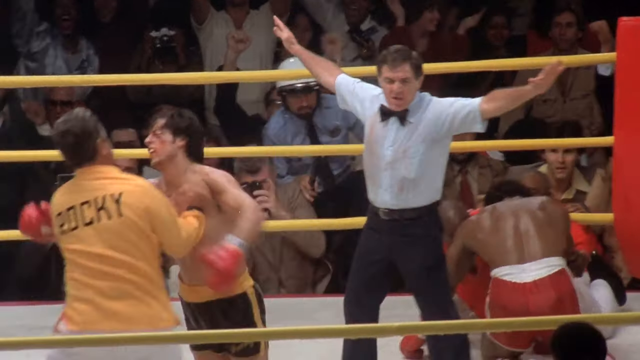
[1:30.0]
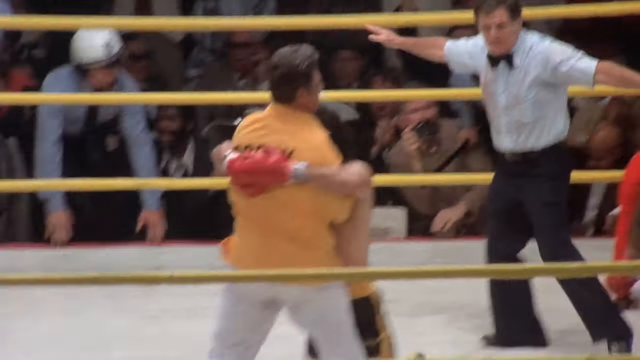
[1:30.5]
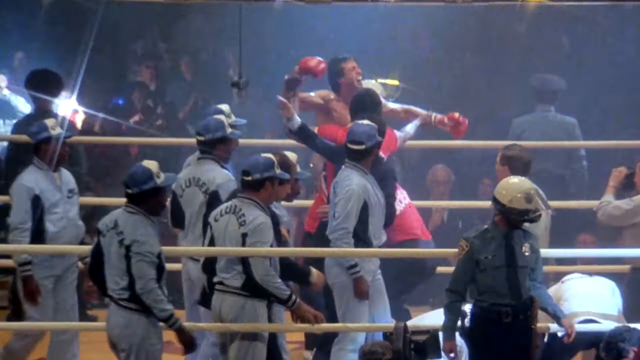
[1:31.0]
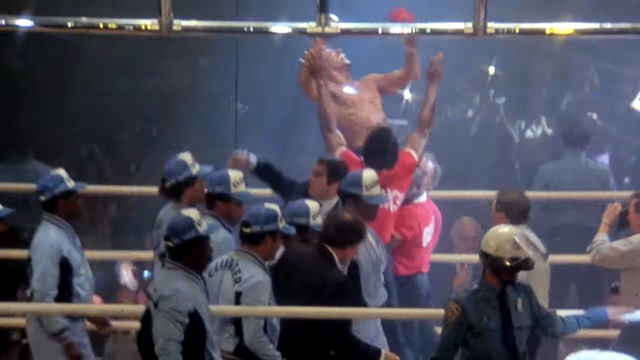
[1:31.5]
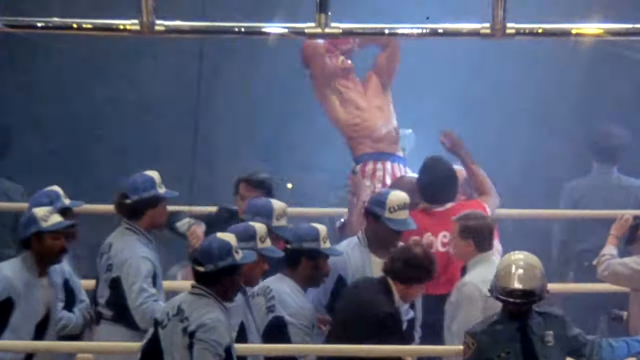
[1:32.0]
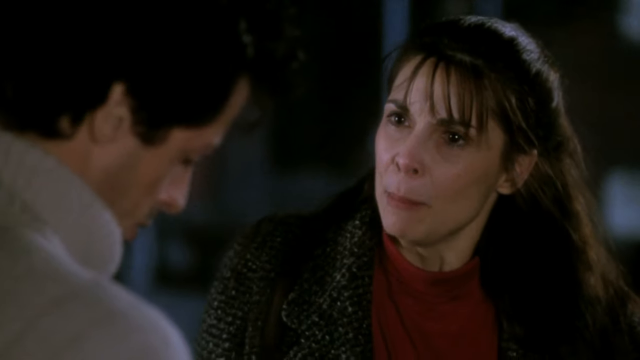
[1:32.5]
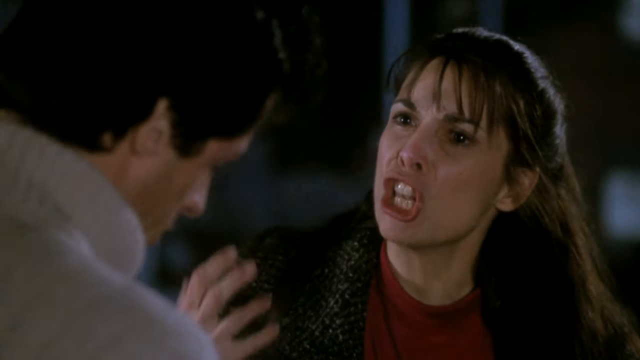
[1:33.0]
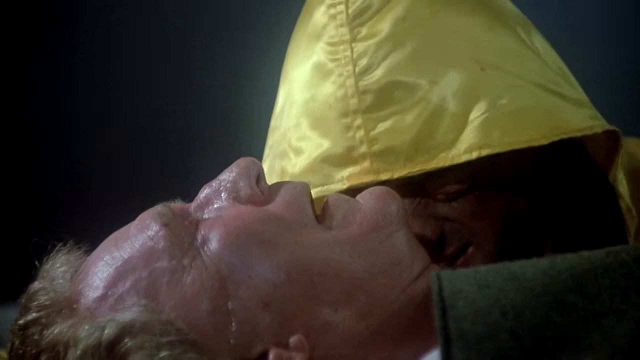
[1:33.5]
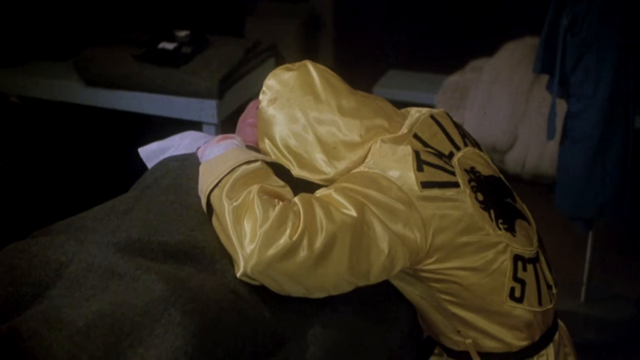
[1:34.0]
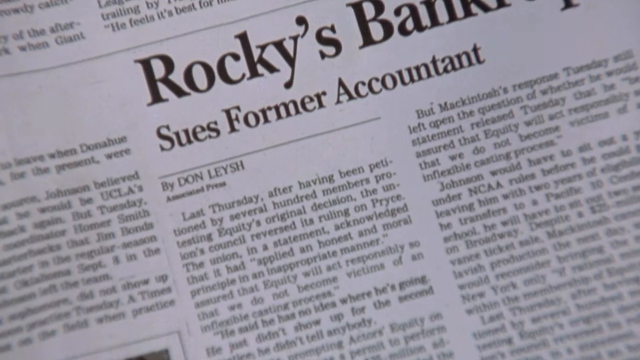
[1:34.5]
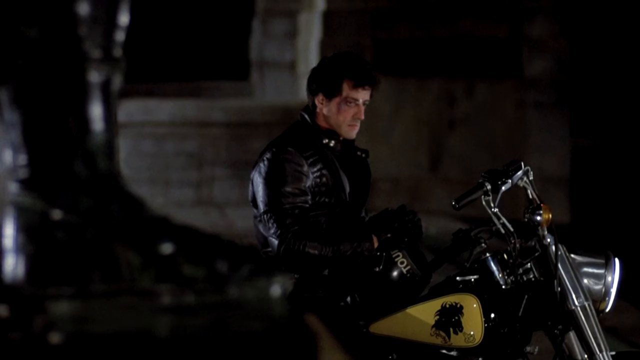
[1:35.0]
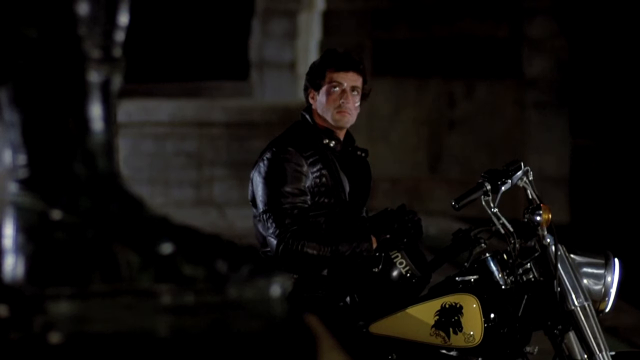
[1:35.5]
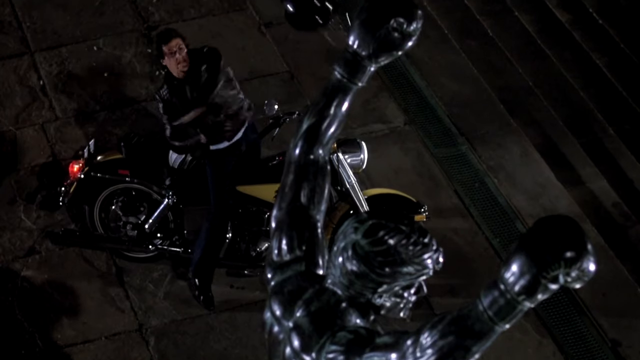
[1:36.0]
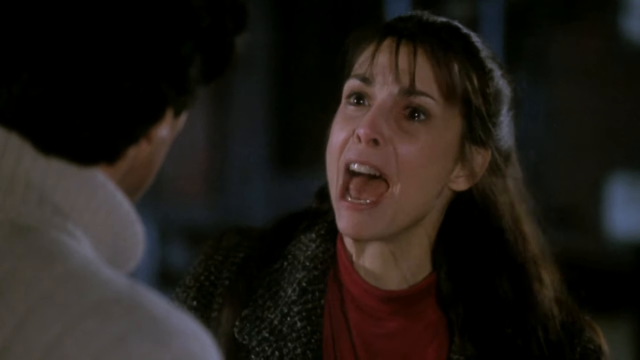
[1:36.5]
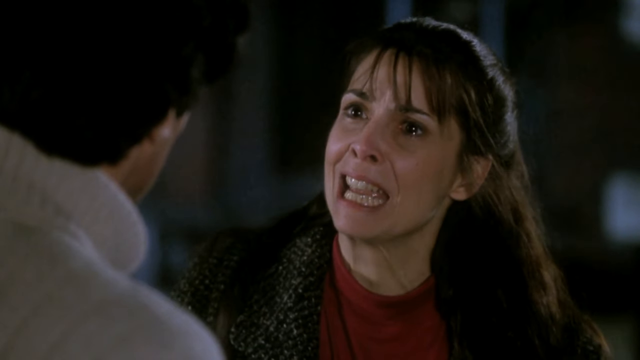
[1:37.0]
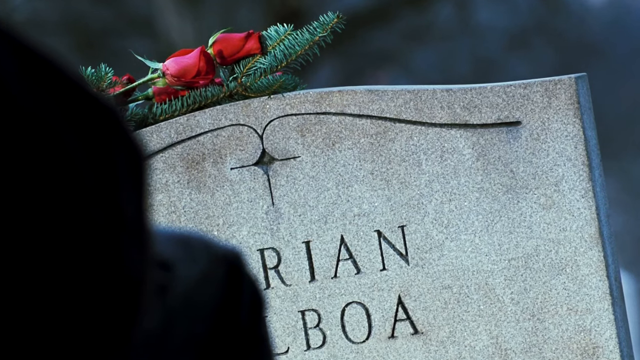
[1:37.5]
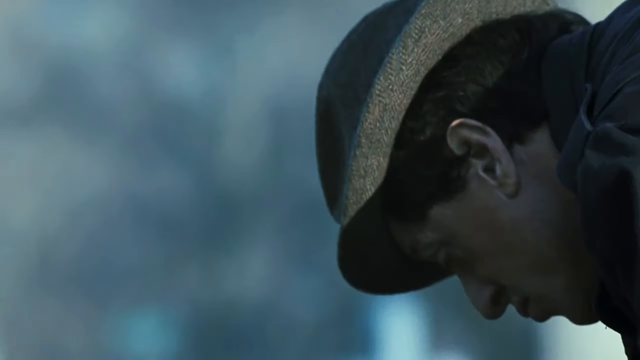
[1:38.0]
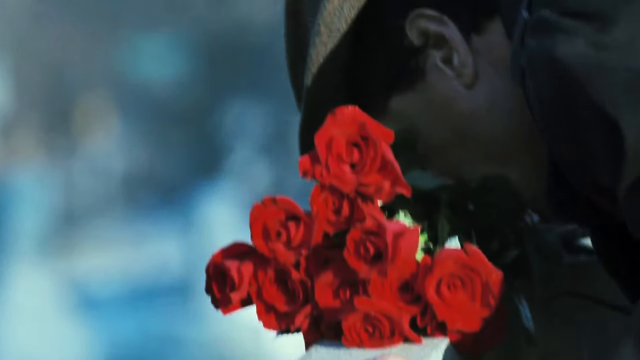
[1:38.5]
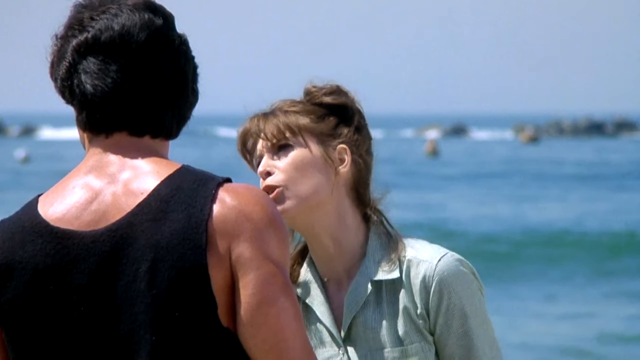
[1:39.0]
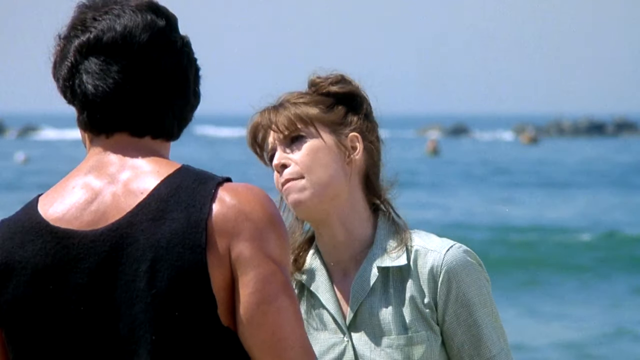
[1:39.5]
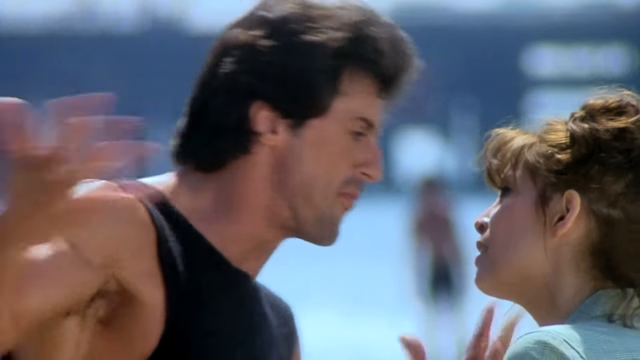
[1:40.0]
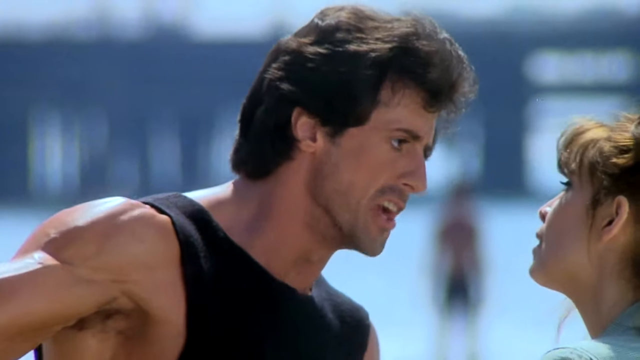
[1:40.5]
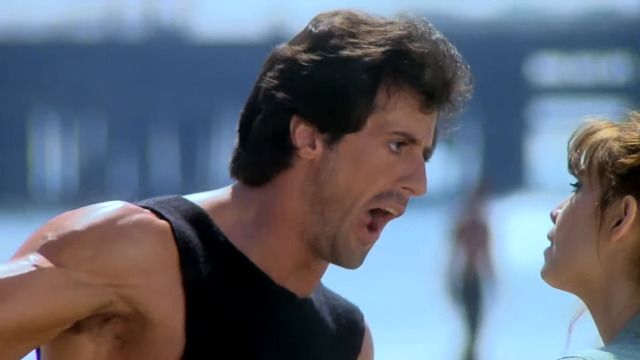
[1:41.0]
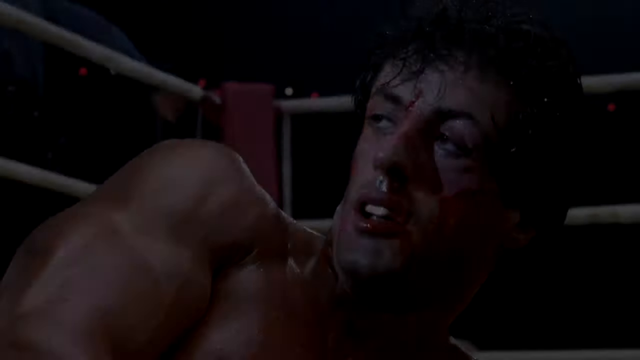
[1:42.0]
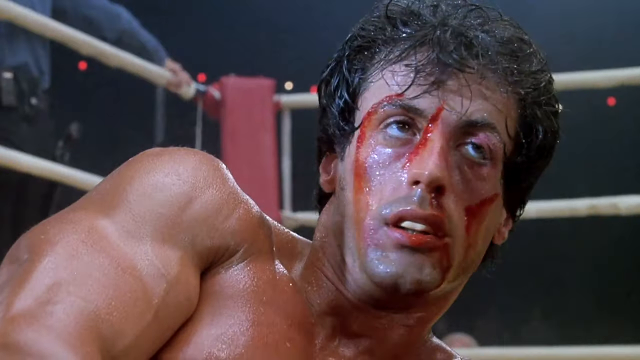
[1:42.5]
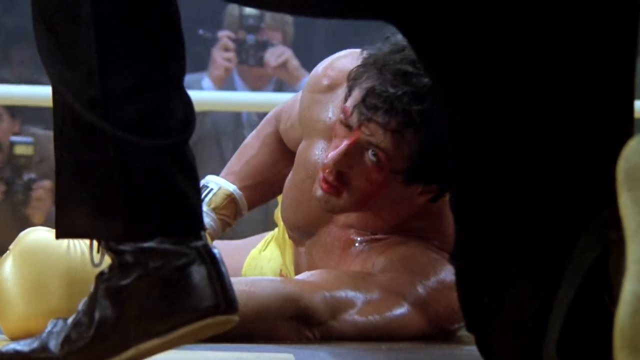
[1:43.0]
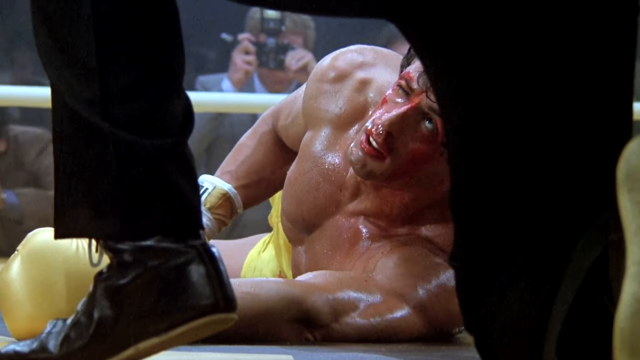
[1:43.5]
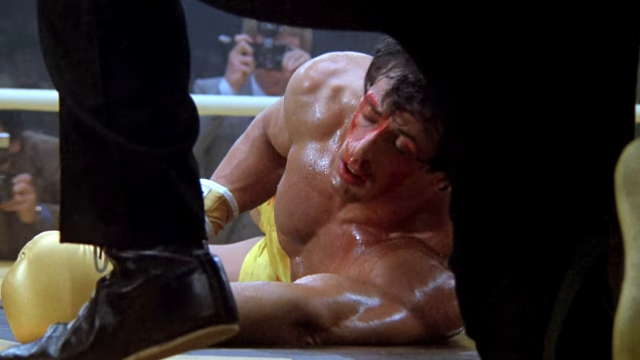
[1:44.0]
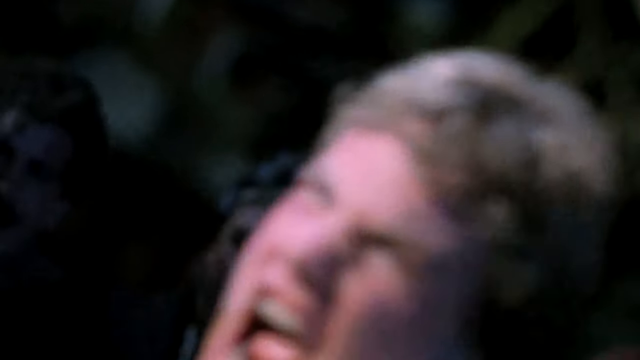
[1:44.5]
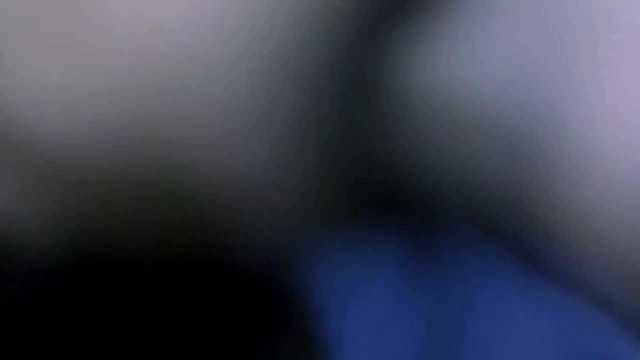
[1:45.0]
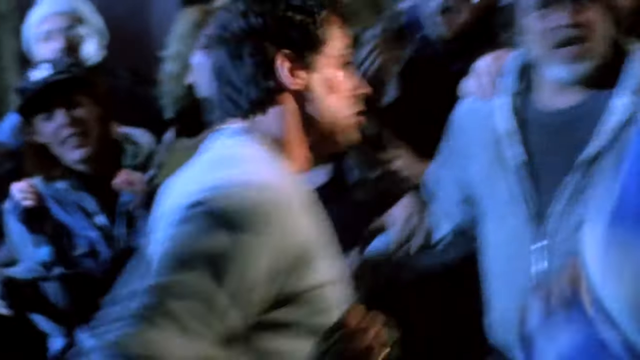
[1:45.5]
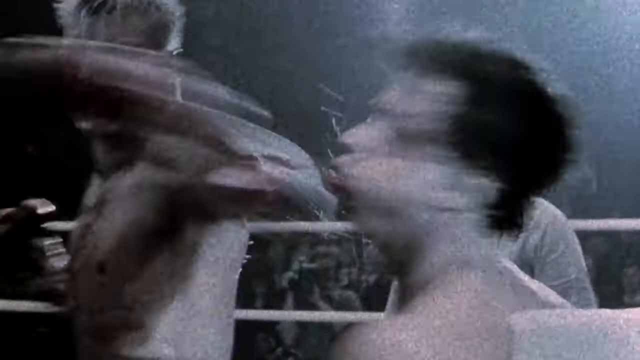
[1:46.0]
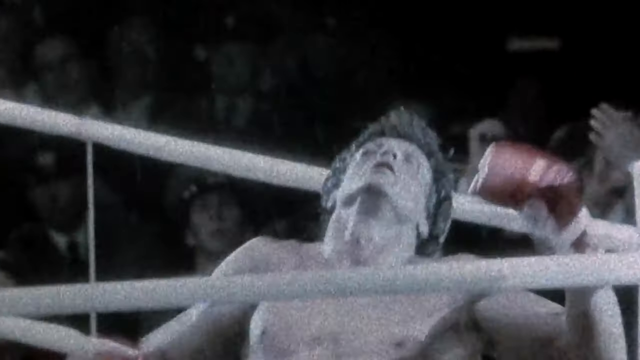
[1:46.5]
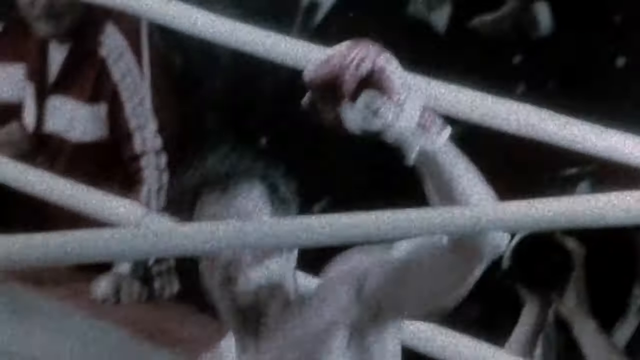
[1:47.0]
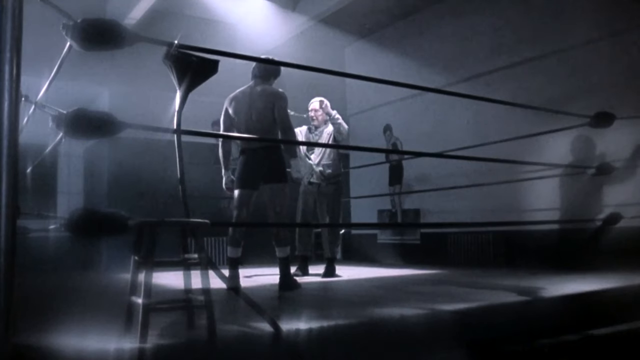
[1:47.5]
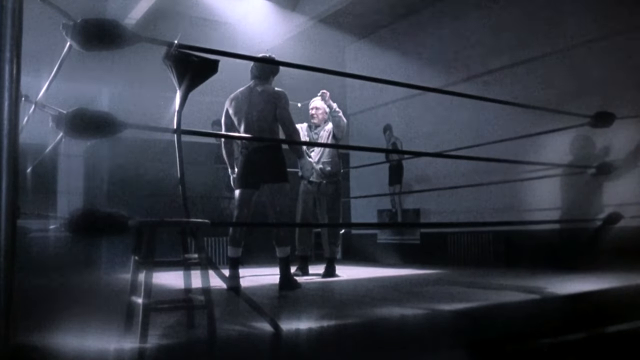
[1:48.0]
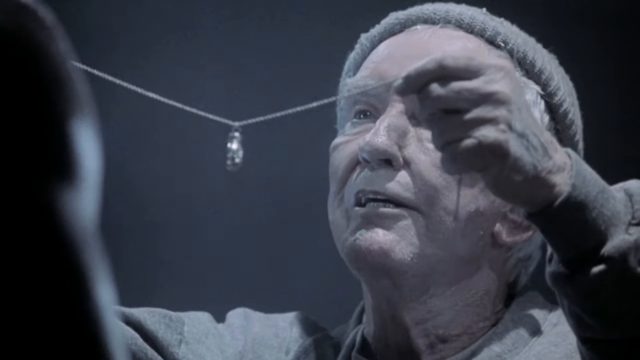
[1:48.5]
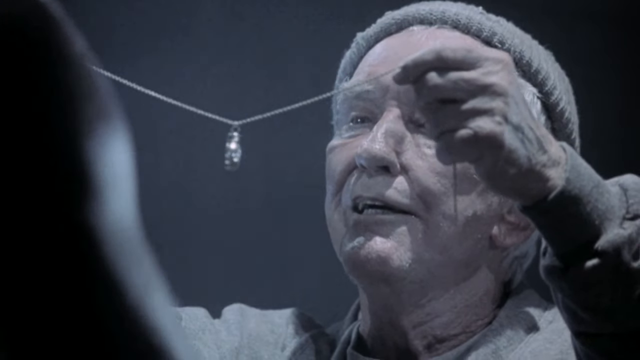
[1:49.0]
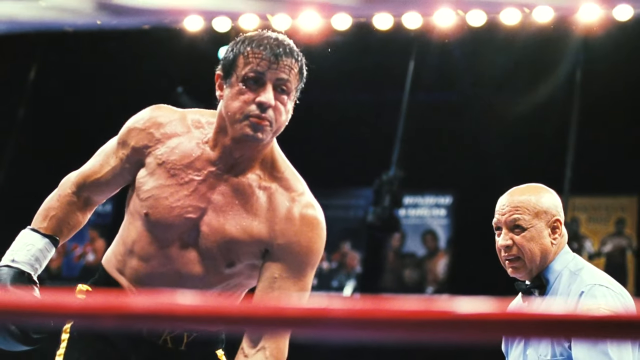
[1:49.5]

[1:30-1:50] Two boxers wearing only shorts fight in a ring, with a referee in a white shirt and black trousers. The fight is shown as intense, and many fans outside are cheering. The scene shifts to show the man has won; fans have joined him in the ring and carry him up as they cheer. Another man in a yellow hood is crying. Different scenes of the man fighting follow: the main character takes several punches and blood trickles down his face. The man holds on to the referee. The main character is also seen arguing with a woman; he is very angry and raises a hand as if he wants to slap her.